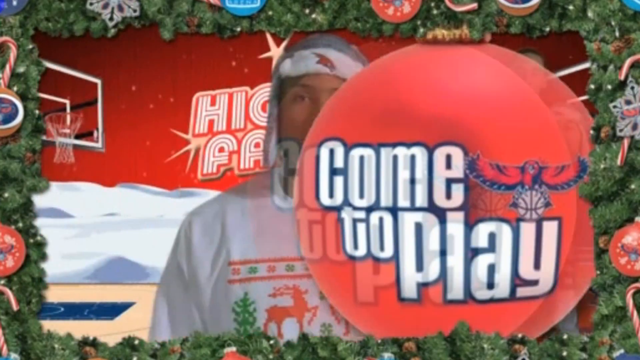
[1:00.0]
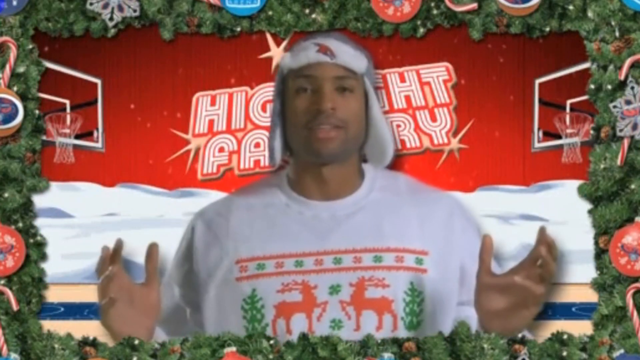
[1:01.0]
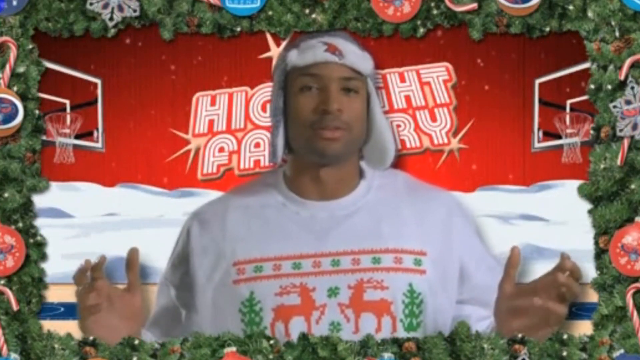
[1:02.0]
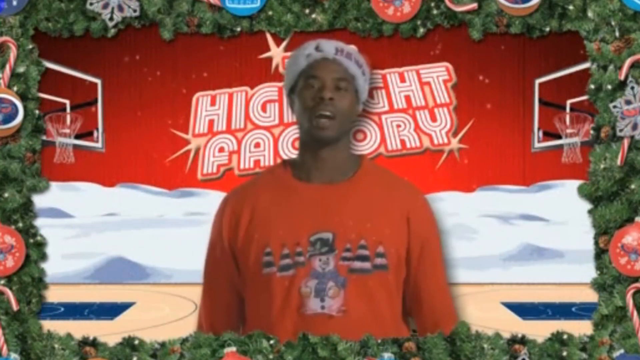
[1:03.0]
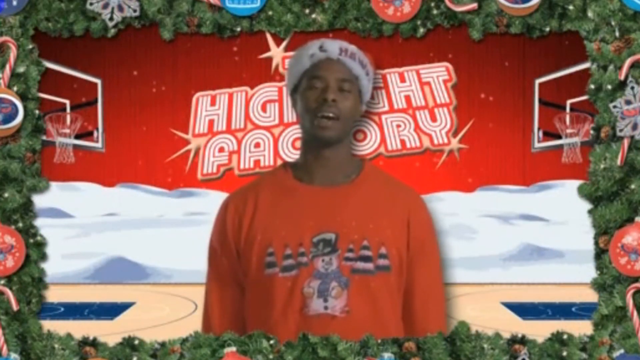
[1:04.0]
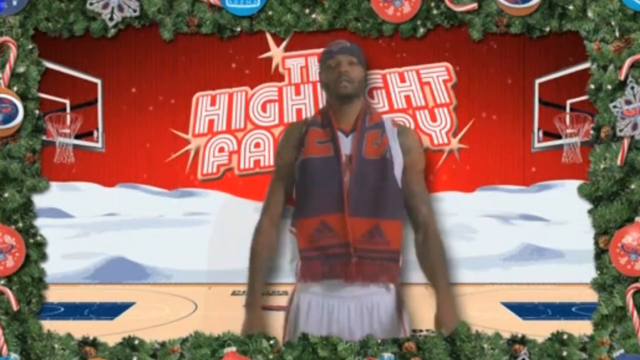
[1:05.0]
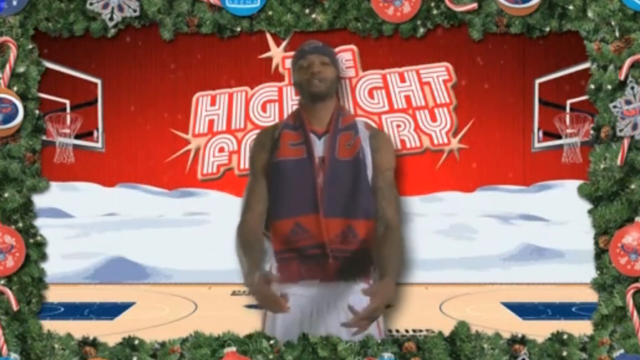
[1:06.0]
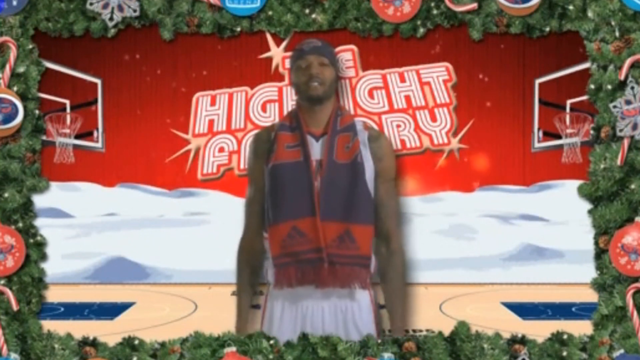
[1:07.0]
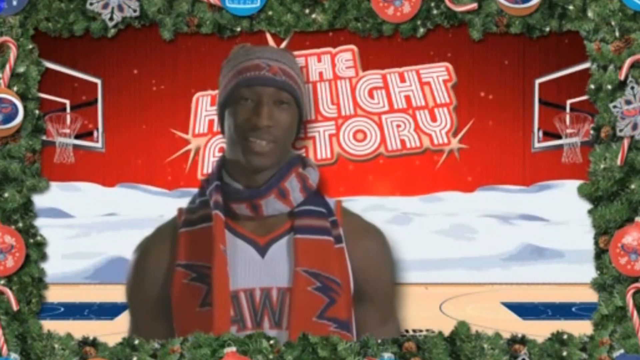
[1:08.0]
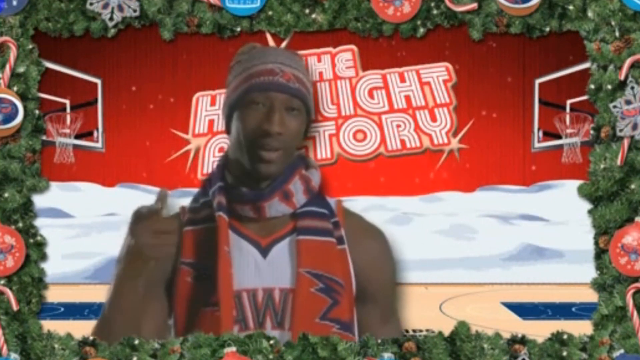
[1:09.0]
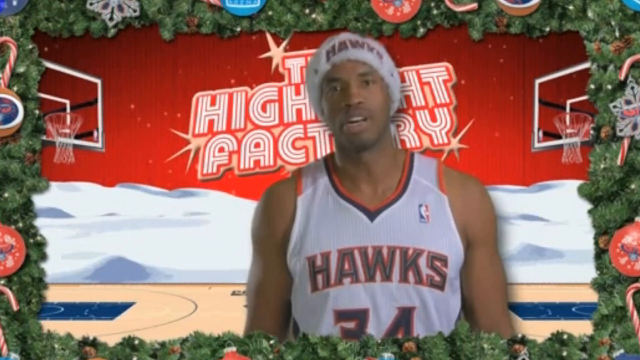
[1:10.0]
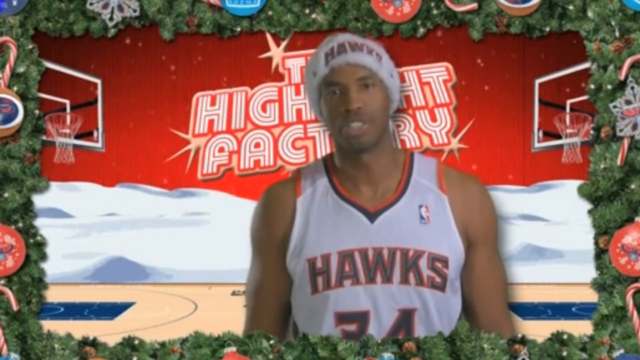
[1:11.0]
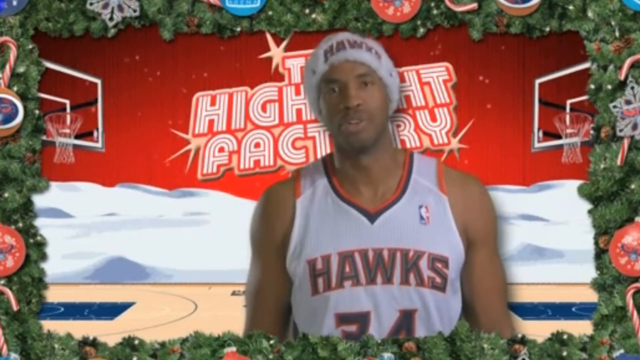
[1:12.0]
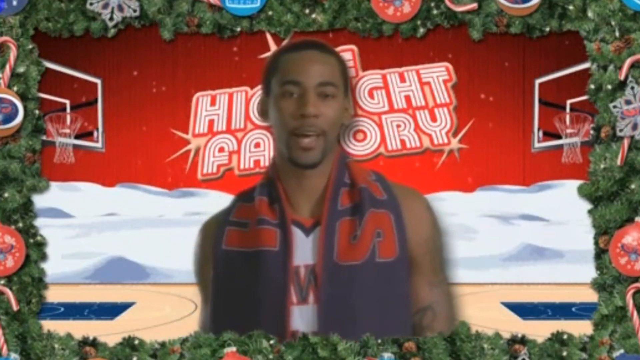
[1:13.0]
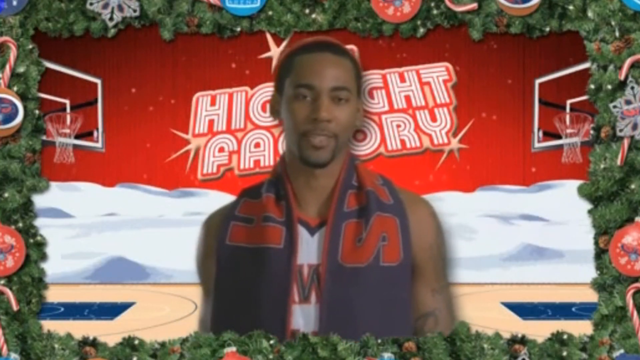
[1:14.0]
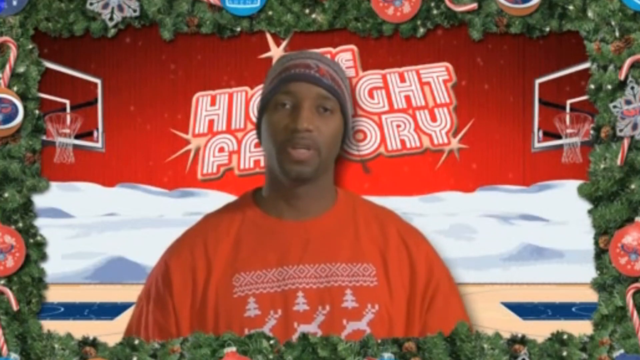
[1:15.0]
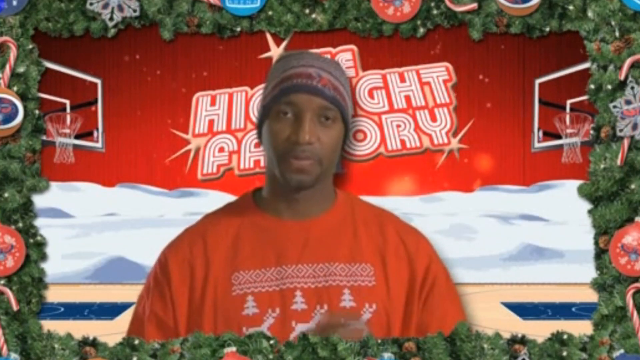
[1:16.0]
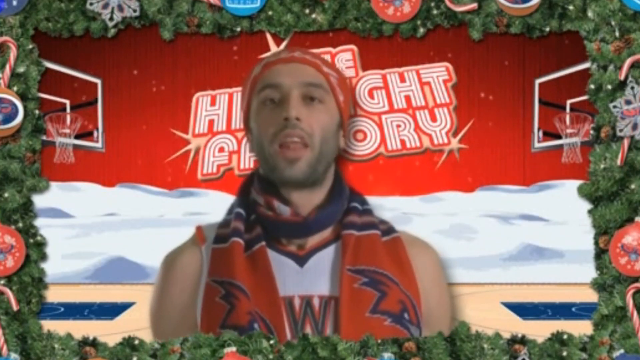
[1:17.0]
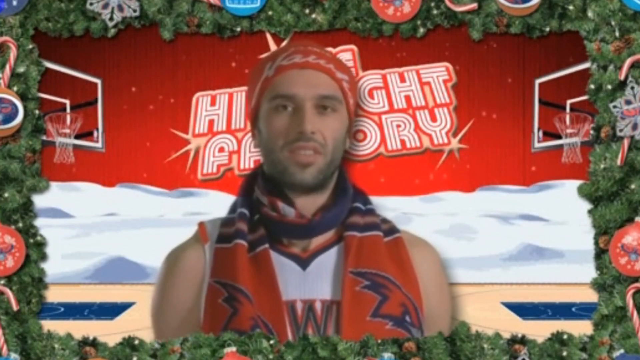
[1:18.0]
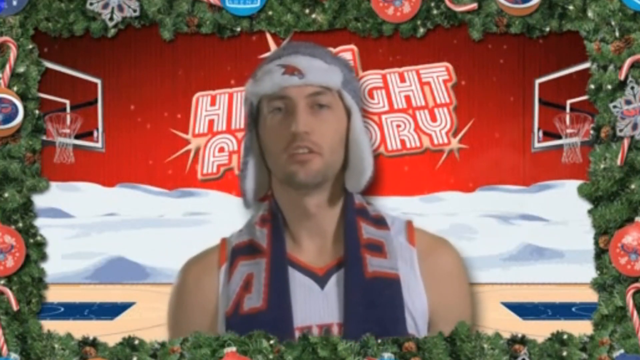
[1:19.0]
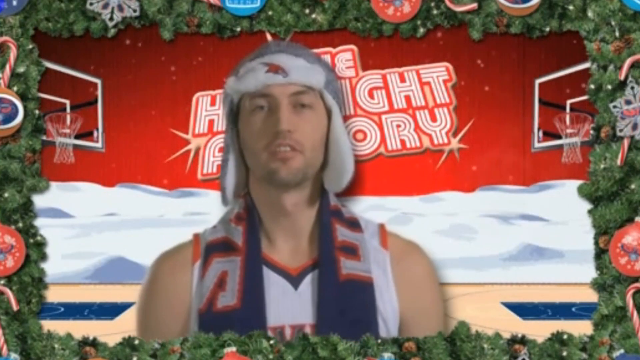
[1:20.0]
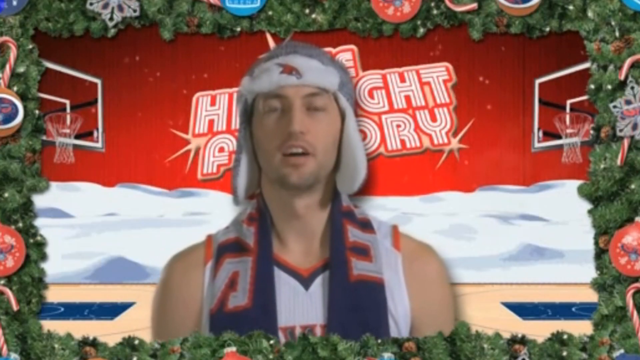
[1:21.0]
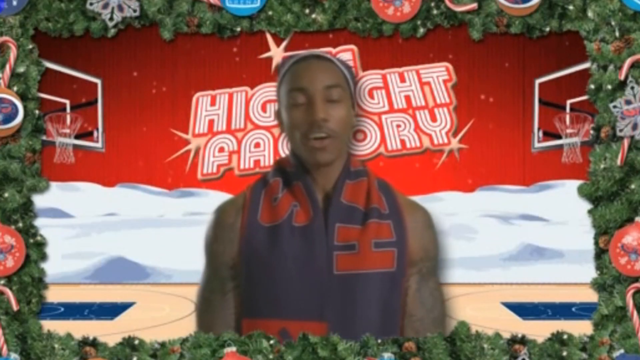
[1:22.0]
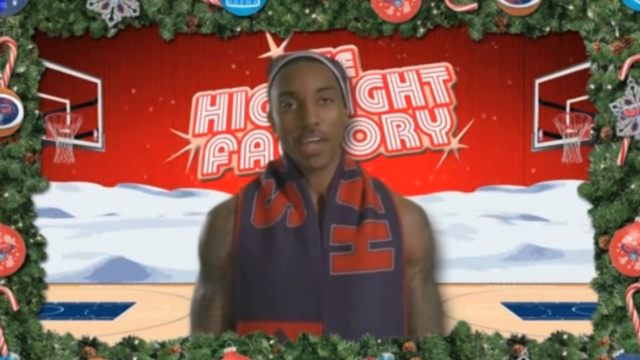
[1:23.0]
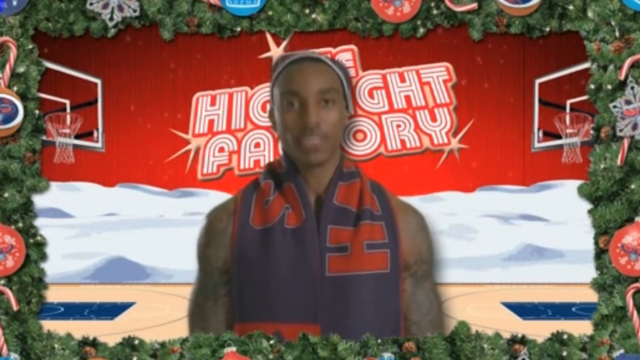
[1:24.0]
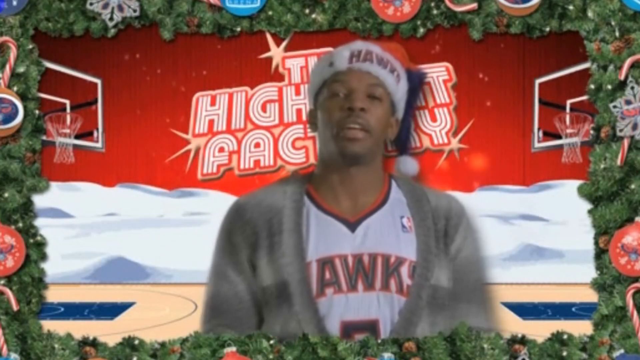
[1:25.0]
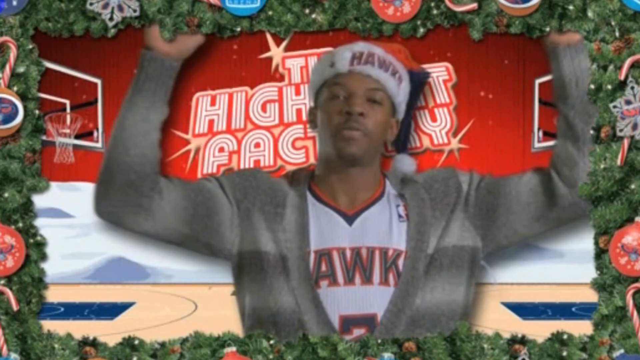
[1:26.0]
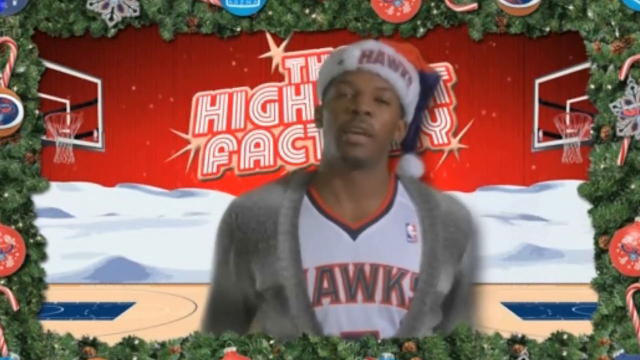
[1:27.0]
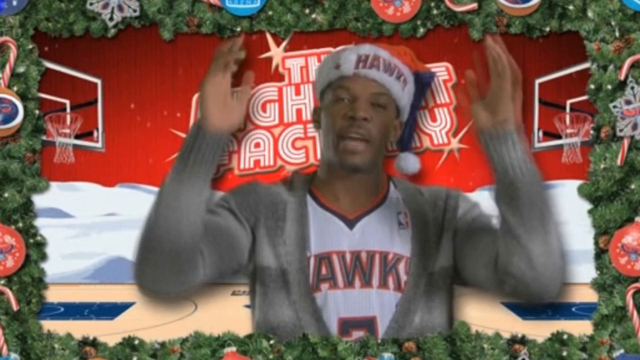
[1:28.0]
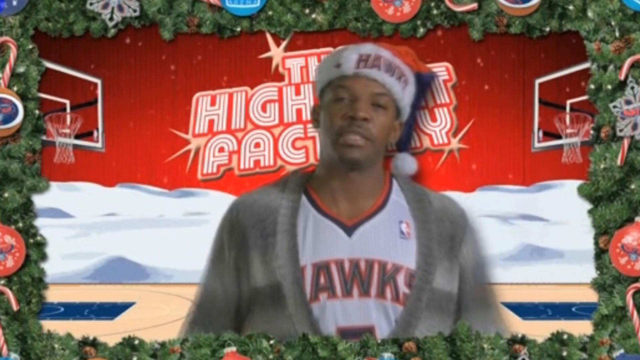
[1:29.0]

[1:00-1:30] A large red Christmas ornament reading "come to play" moves from the left side of the screen to the right and then off the screen. A man stands looking at the camera with his hands held up at his sides; he looks like he is talking or maybe singing as he kind of moves his body and dances. The video then moves through different men standing on screen, talking toward the camera. Some wear Atlanta Hawks jerseys and others wear Christmas sweaters, all in Atlanta Hawks or Christmas-themed clothing. One wears an Atlanta Hawks Christmas hat that looks like a Santa Claus hat with hawks on the front, and Santa Claus hats with the Atlanta Hawks logo appear. They all look at the camera, talking; some swing their arms around, and some hold a hand up in a kind of little thumbs-up gesture.